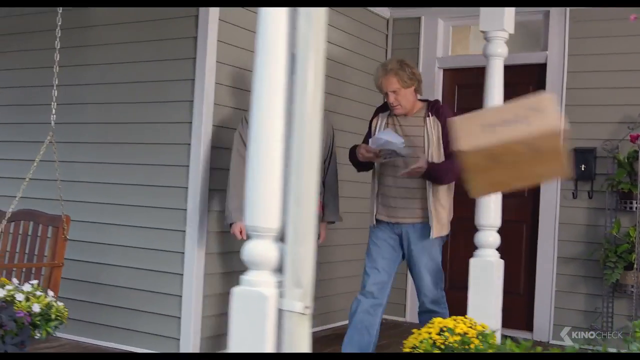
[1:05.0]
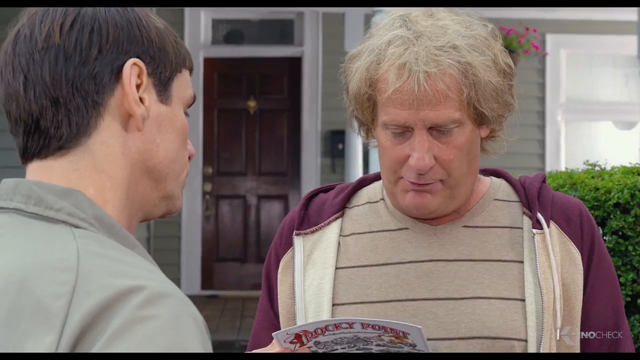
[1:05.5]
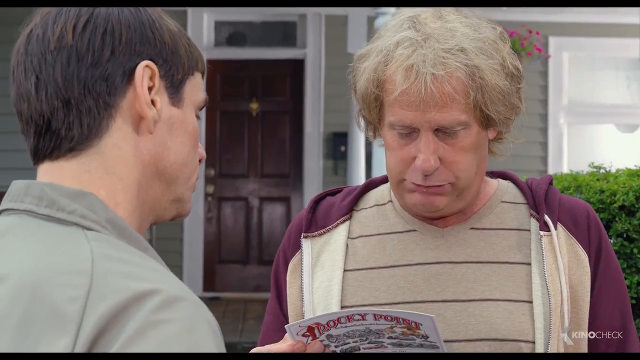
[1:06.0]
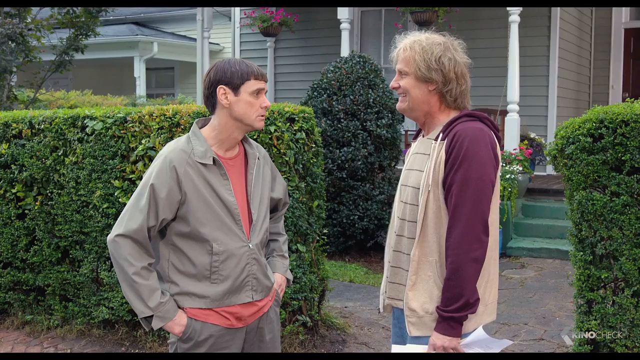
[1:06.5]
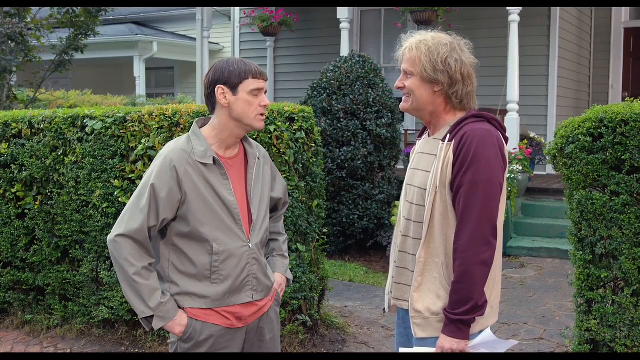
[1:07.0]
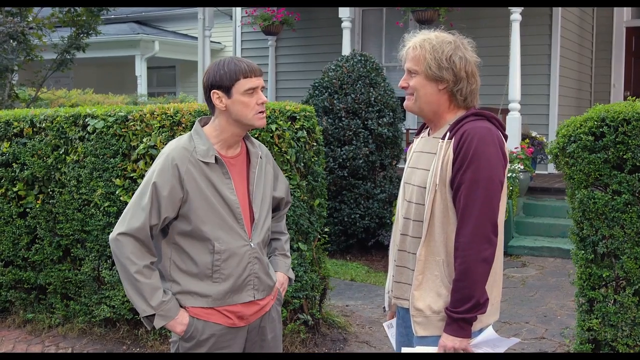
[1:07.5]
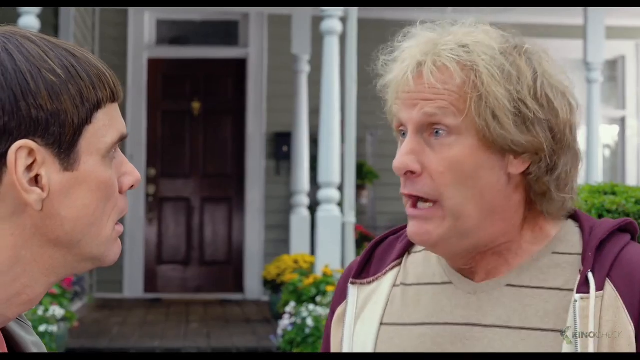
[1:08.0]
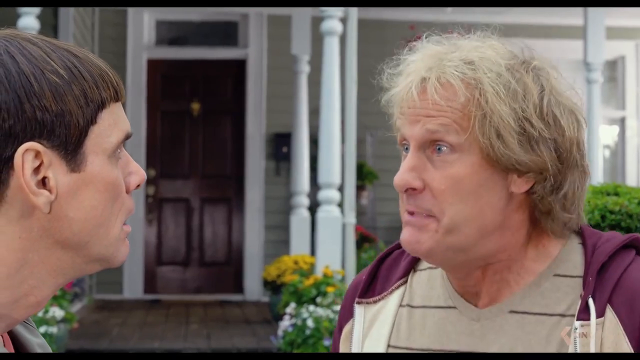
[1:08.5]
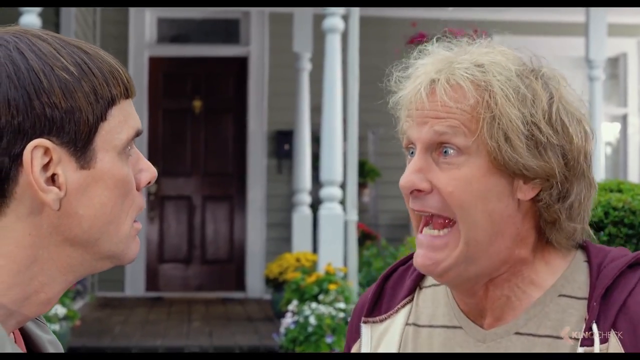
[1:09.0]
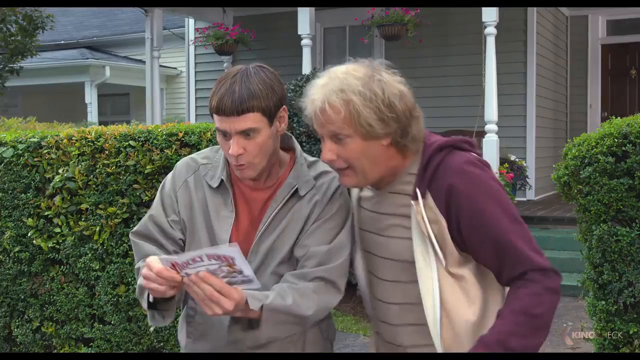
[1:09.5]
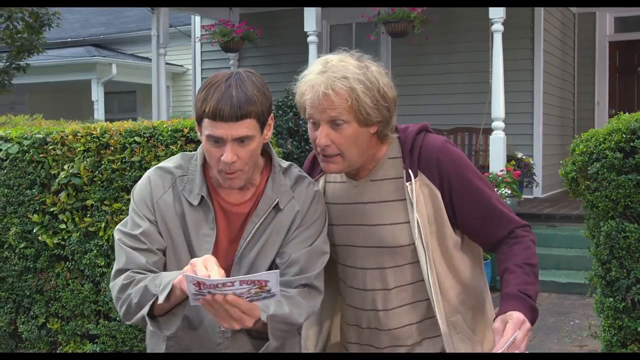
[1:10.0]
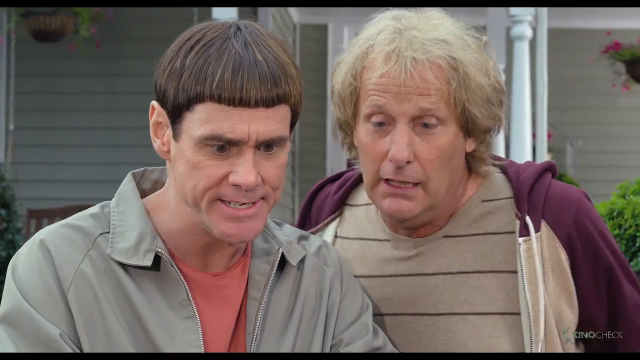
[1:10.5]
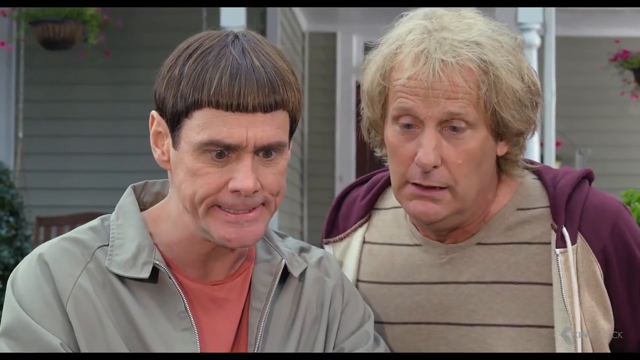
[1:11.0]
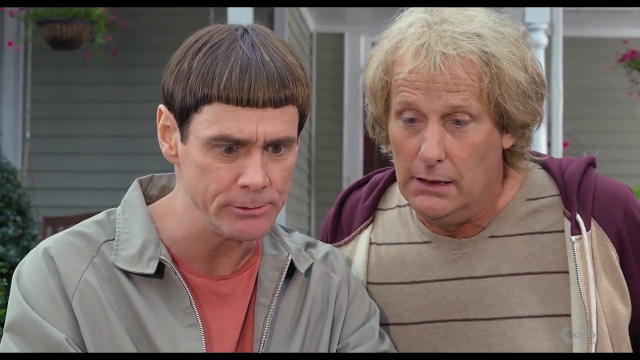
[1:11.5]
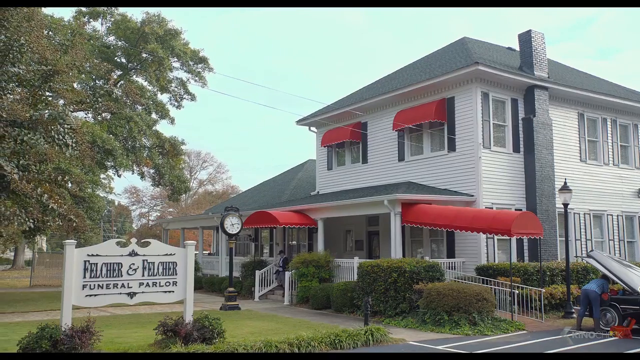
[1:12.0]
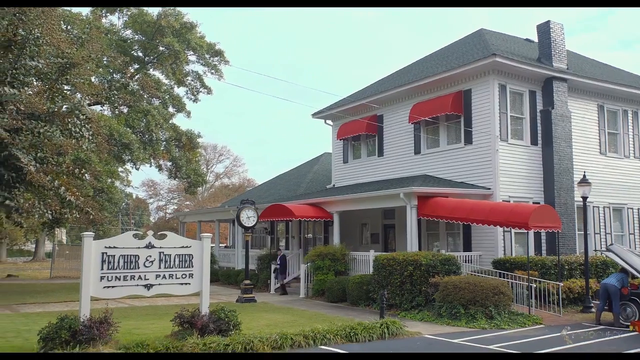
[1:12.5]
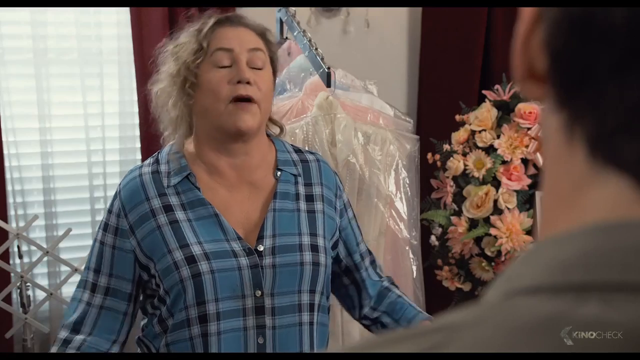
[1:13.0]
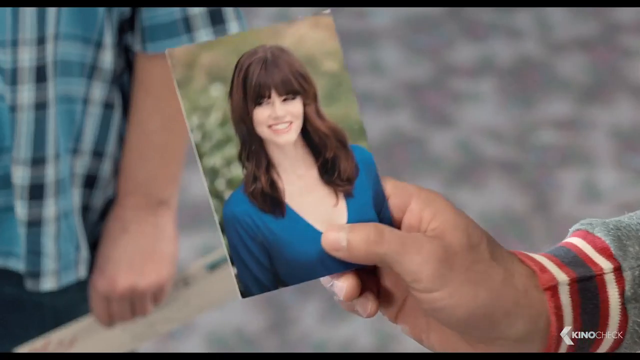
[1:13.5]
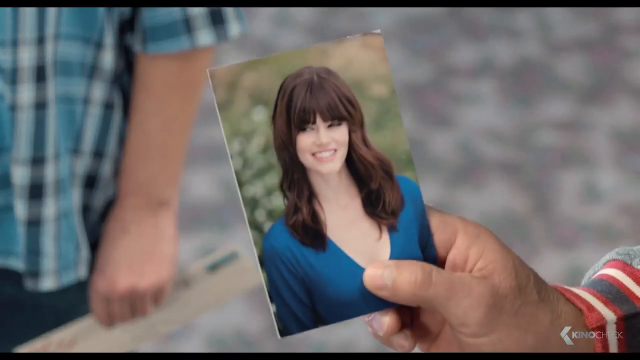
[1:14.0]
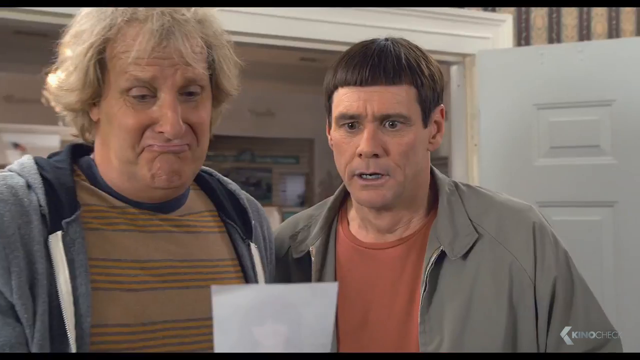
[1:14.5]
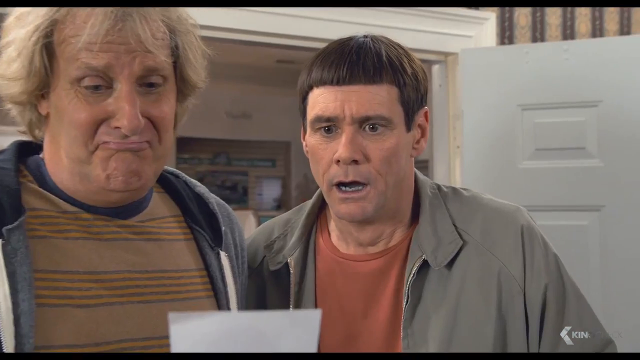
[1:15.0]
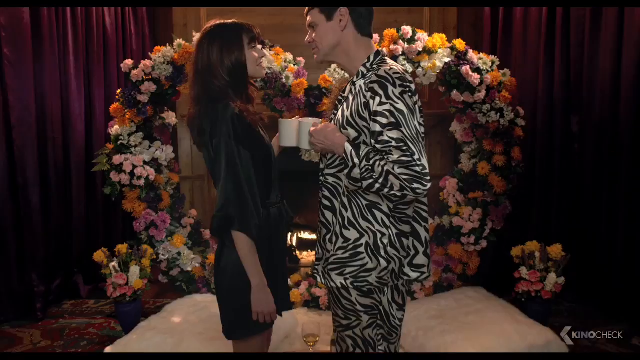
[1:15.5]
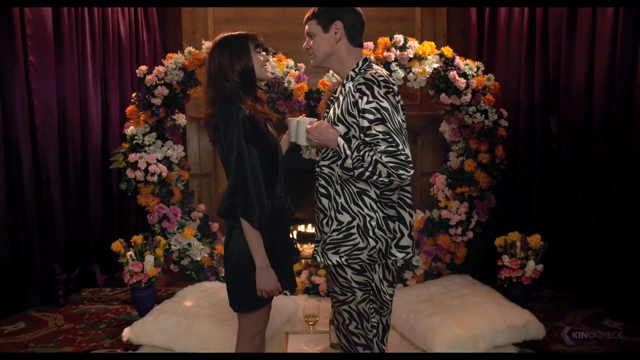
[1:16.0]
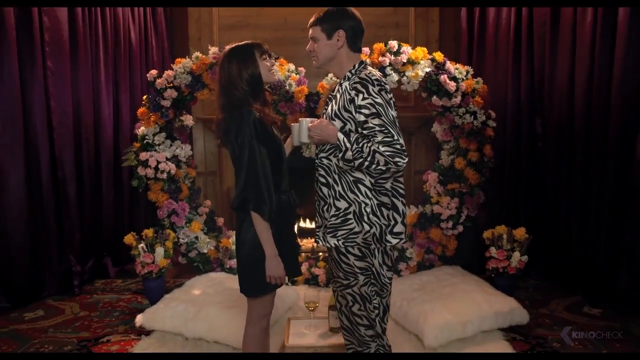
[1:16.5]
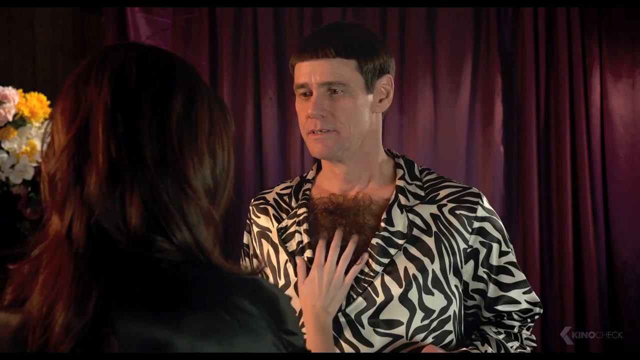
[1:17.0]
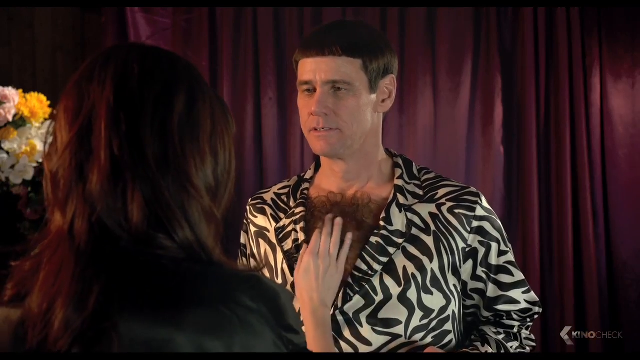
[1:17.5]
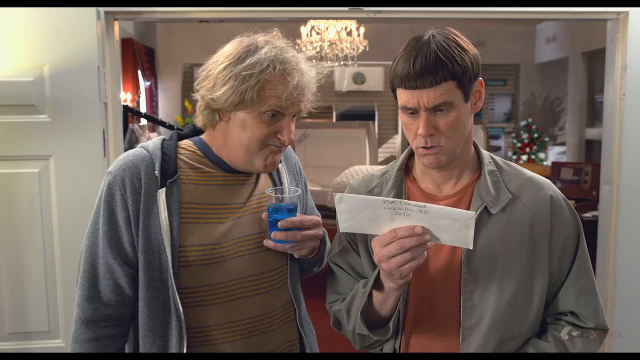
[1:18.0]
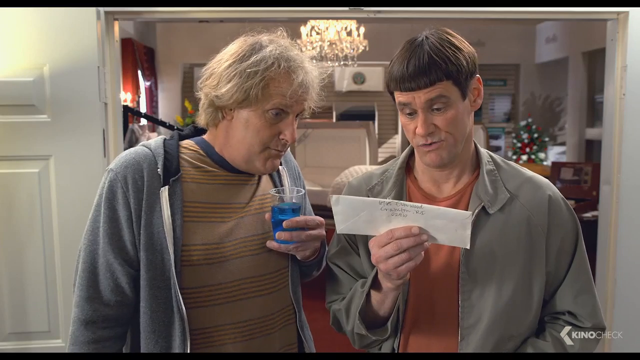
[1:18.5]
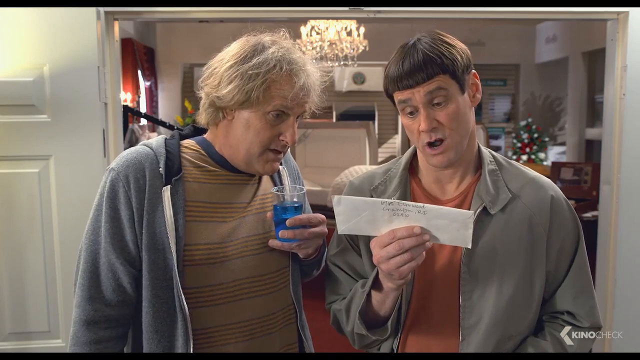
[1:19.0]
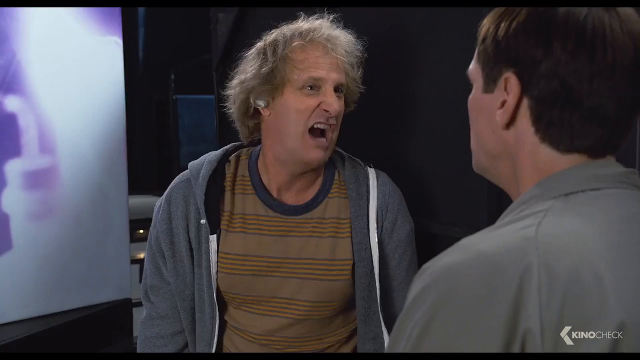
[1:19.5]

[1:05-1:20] The two men walk out from a house. The older man has a box in one hand and letters in the other; he picks up letters from the box, then picks up papers and throws the box to the side. They yell something loudly to each other, very excited after reading something on the paper. The scene cuts to Felcher and Felcher Funeral Parlor, a very old-style funeral parlor, where they talk to an older woman and hold up a picture of a very attractive young woman, whom the wheelchair man seems to recognize. Next is a heart made of flowers, and the two are in their pajamas talking to each other in what looks like a romantic sort of scene. It then cuts back to the two men, who are apparently reminiscing about her; the older man has a cup with some kind of blue drink in it.